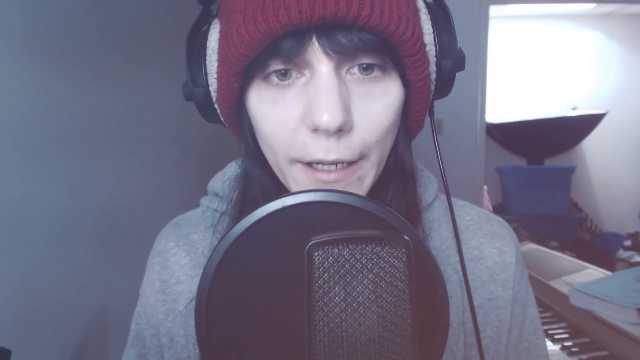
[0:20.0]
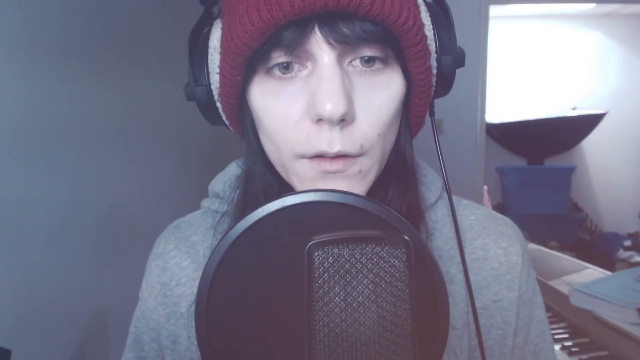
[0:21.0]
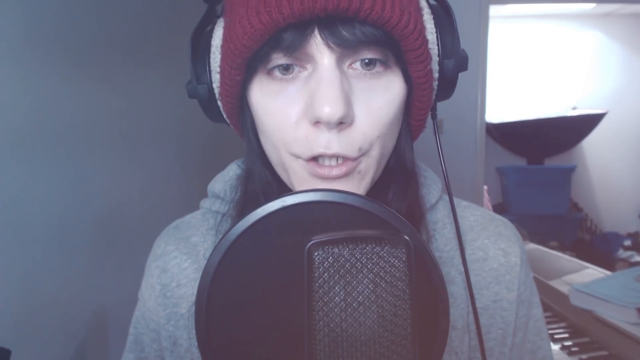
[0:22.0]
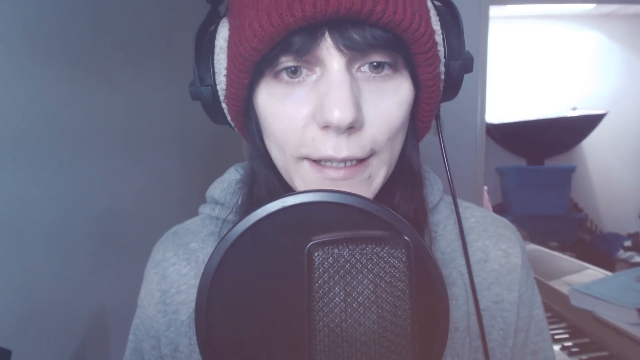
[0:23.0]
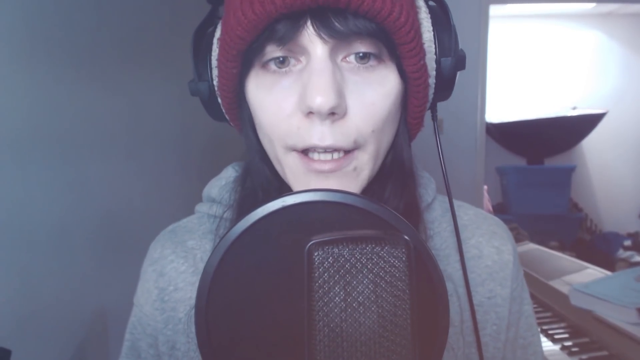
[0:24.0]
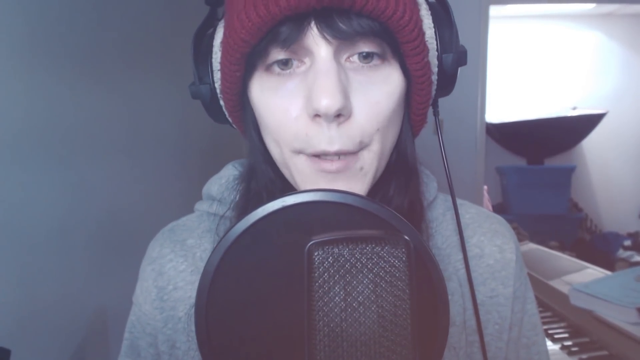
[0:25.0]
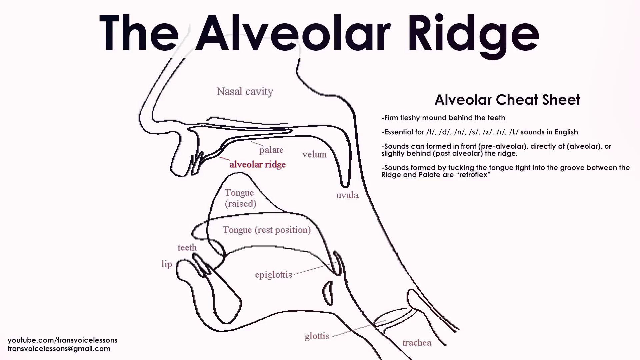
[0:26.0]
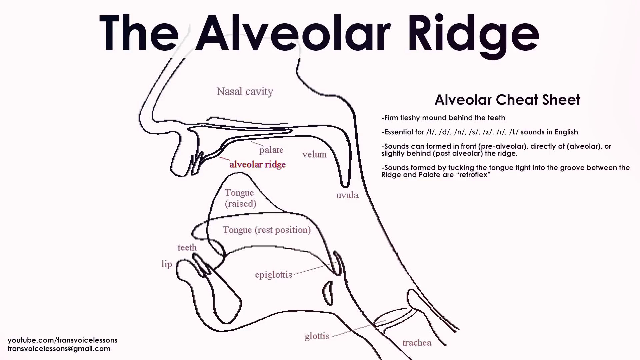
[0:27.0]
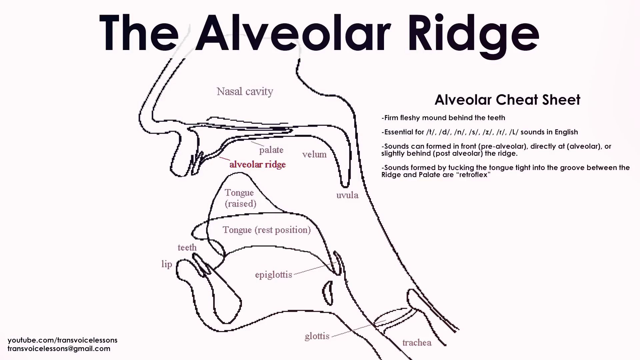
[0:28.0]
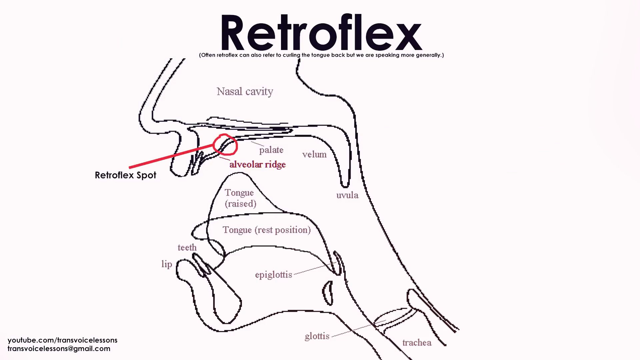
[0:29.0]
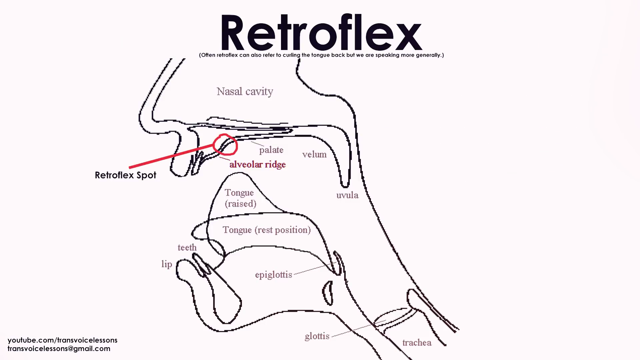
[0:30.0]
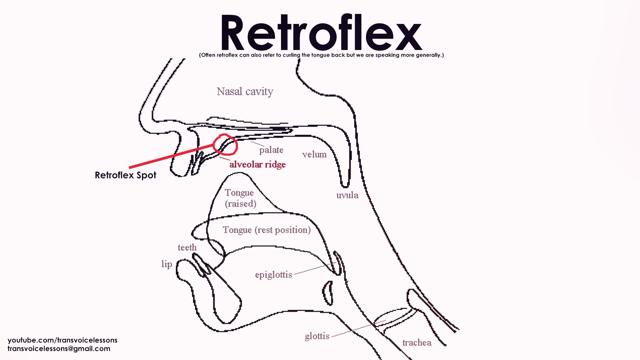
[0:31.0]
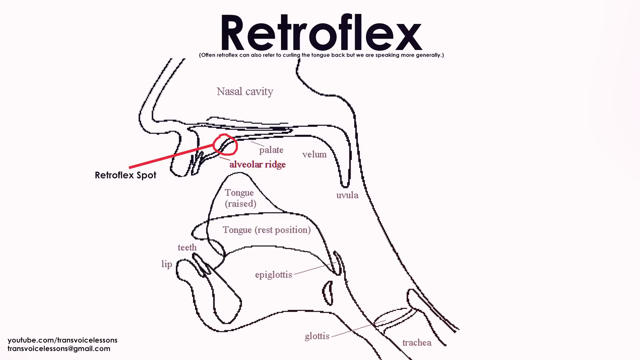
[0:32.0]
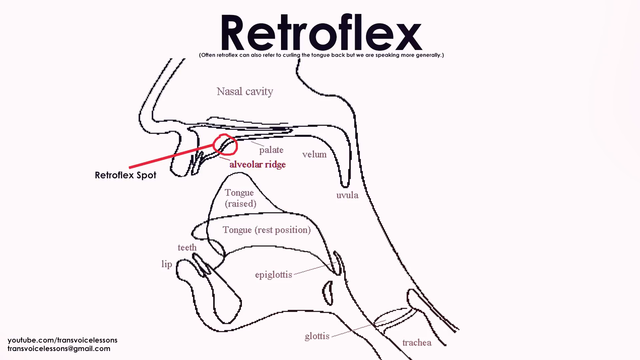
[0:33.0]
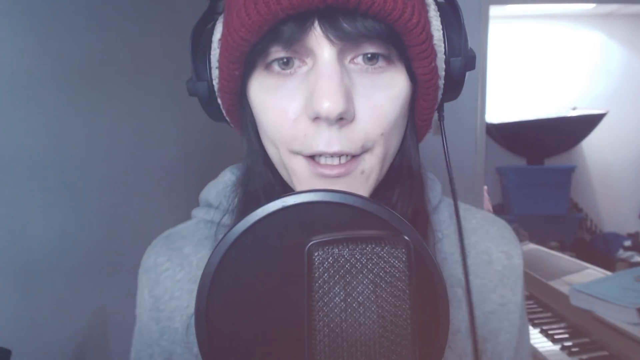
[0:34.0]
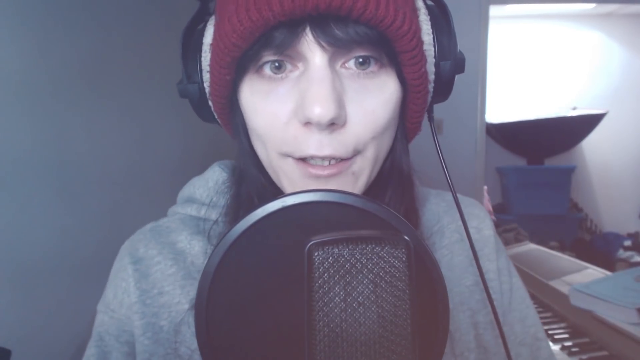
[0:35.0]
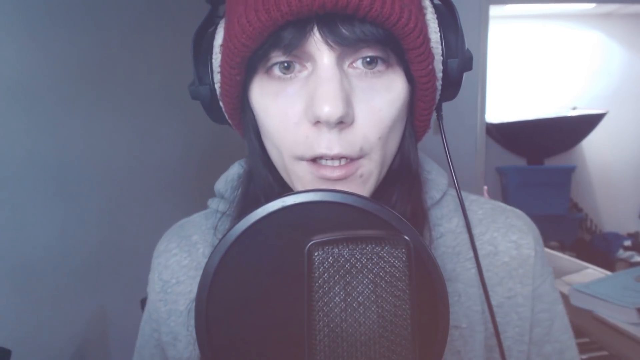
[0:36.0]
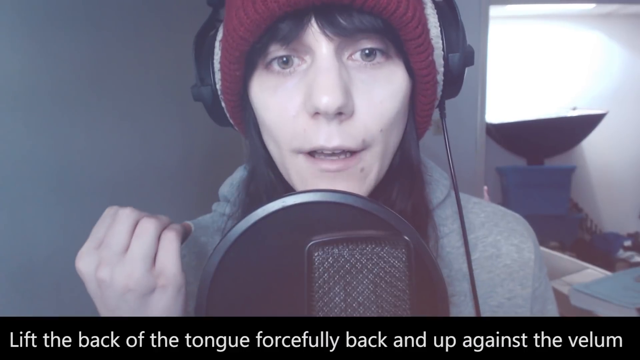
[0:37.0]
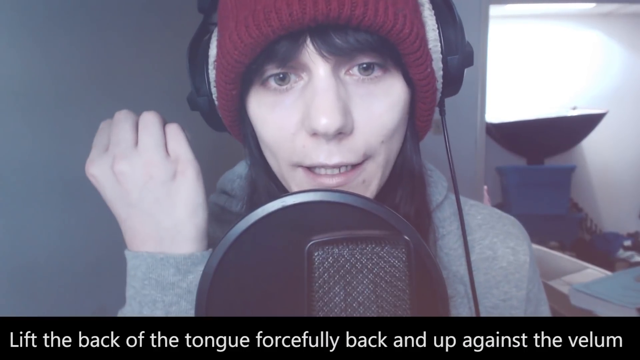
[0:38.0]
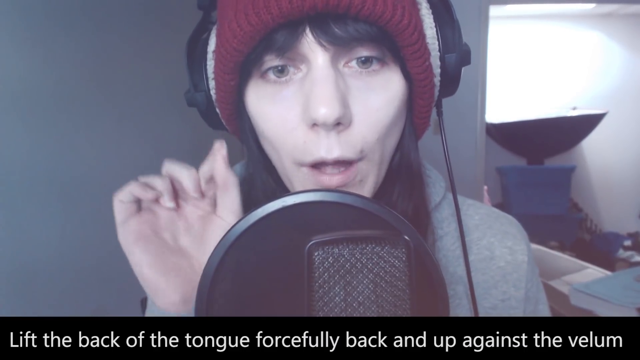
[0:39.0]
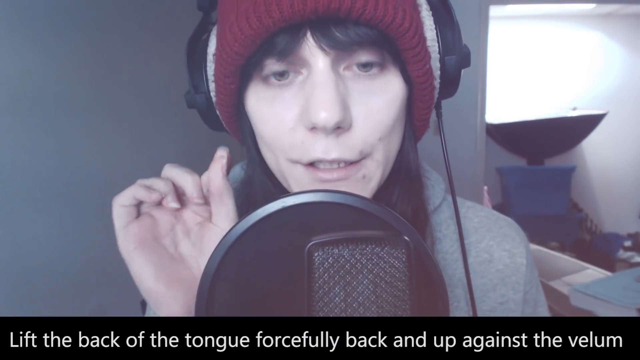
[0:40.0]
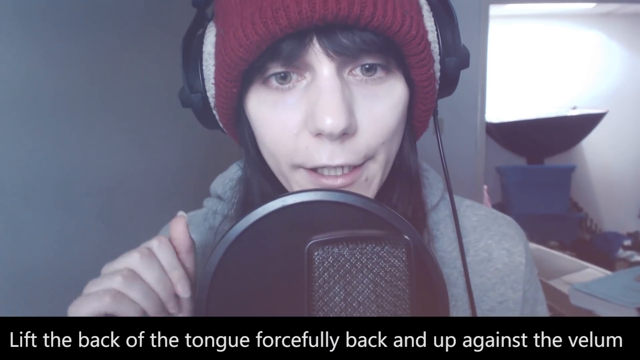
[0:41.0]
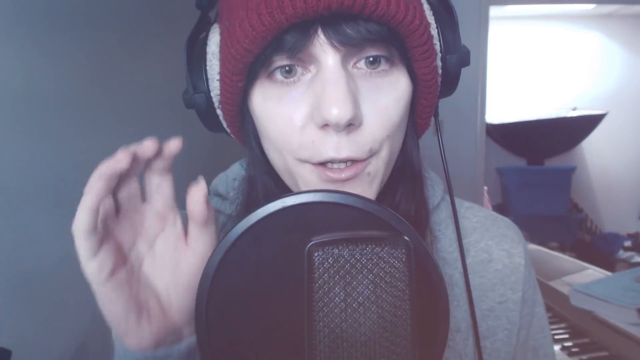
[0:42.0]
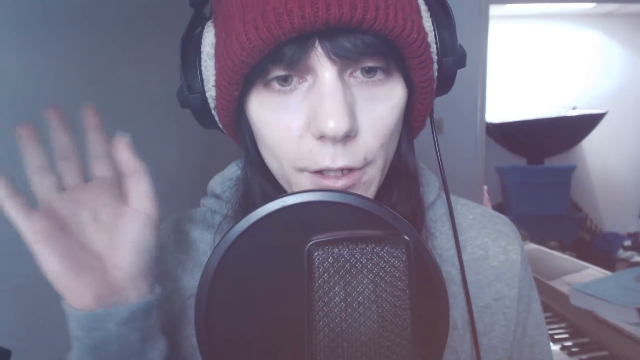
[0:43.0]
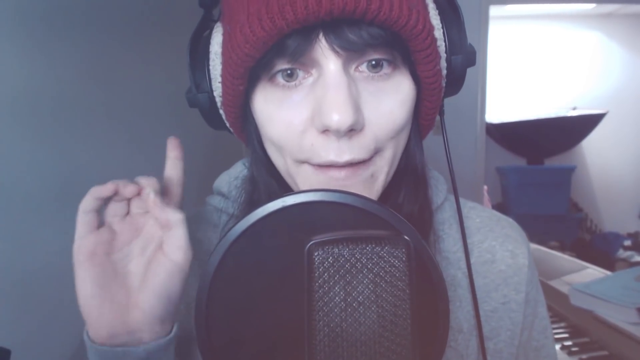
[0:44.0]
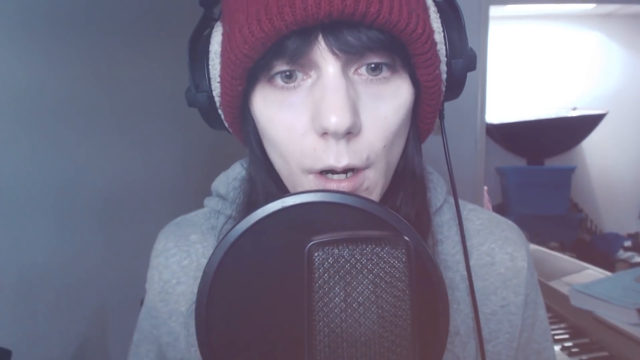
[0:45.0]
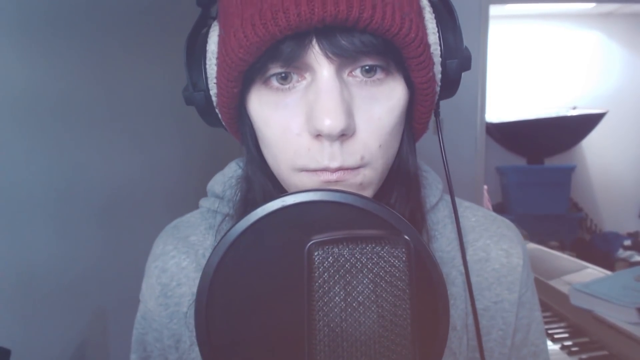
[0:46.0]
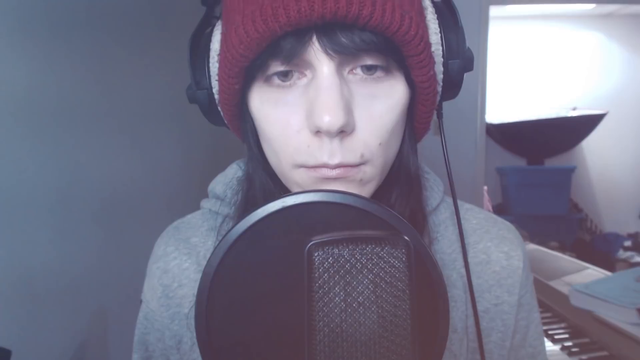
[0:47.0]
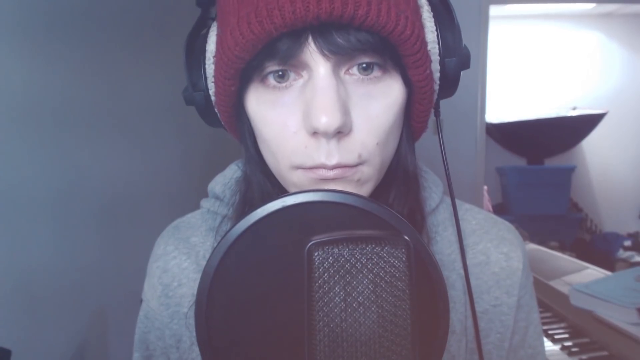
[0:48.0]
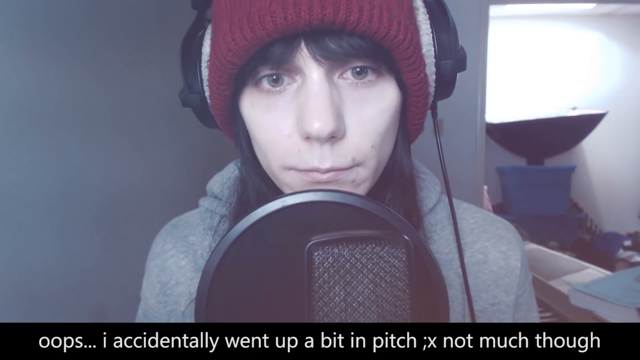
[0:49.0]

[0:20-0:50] A person, a man or a woman, wears a red beanie, a gray sweater or hoodie, and a pair of wired black headphones, and has dark black-brown hair. A microphone is in front of them, a white-gray wall is in the background, and a very large light is on the right side with some other miscellaneous objects. They talk into the microphone. The video then cuts to a white screen with black text reading "the alveolar ridge." A drawing of lines has text labels attached: "nasal cavity," "palate," "alveolar ridge," "velum," "uvula," "tongue," "raised tongue," "rest position," "teeth," "lip," "epiglottis," "glottis," "trachea." More text reads "alveolar cheat sheet, firm fleshy mound behind the teeth, essential for F, D, N, S, Z, F, L sounds in English. Sounds can form in front, pre-alveolar, directly at alveolar, or slightly behind post-alveolar, the ridge. Sounds formed by tucking the tongue tight into the groove between the ridge and palate are retroflex." Another white background follows with text reading "retroflex. Often retroflex can also refer to curling the tongue back, but we are speaking more generally." A red line with a circle carries black text reading "retroflex spot." The video returns to the person in the red beanie and gray hoodie talking into the microphone, with a black banner at the bottom in white text reading "Lift the back of the tongue forcefully back up and against the velum," followed by more text reading "Oops, I accidentally went up a bit in pitch. Not much though."